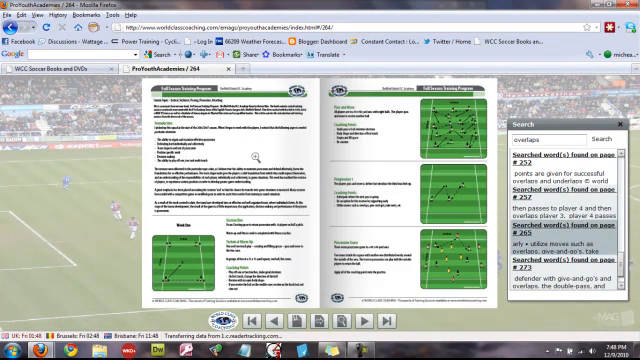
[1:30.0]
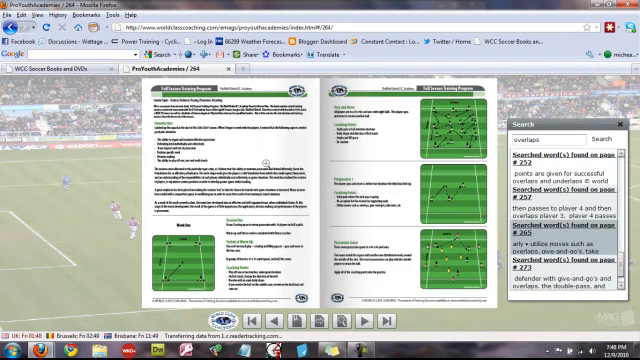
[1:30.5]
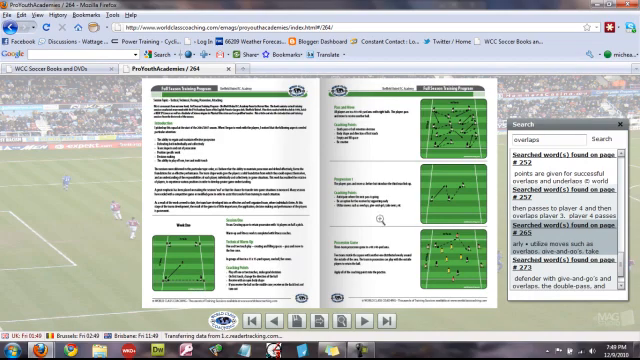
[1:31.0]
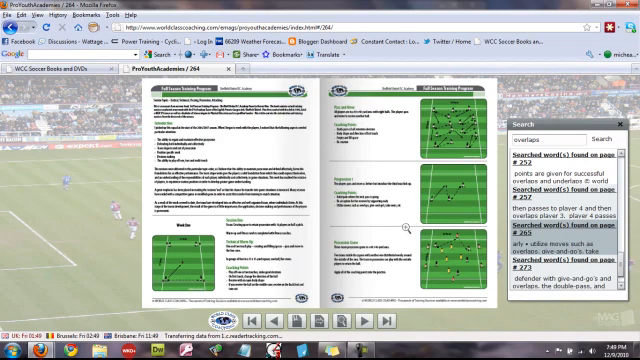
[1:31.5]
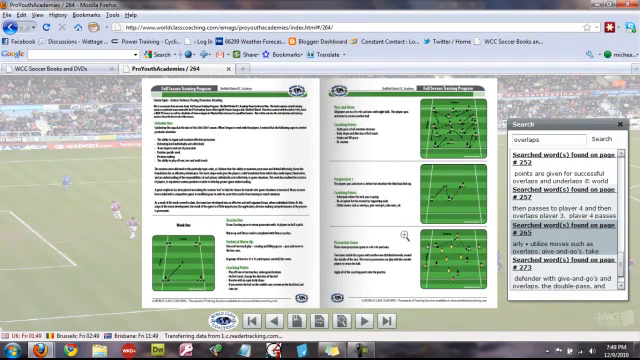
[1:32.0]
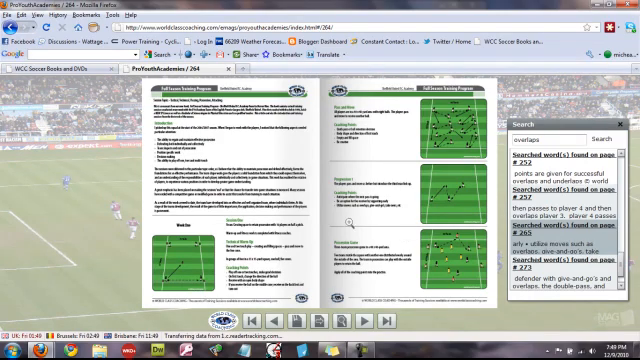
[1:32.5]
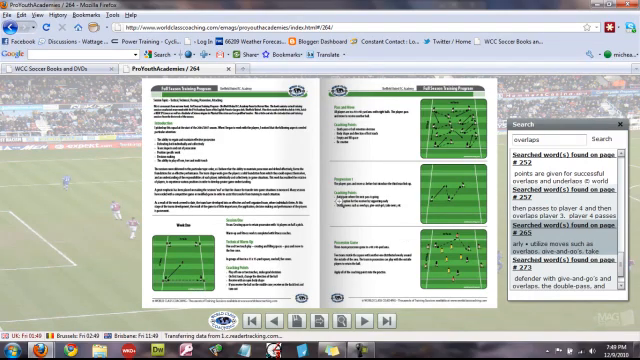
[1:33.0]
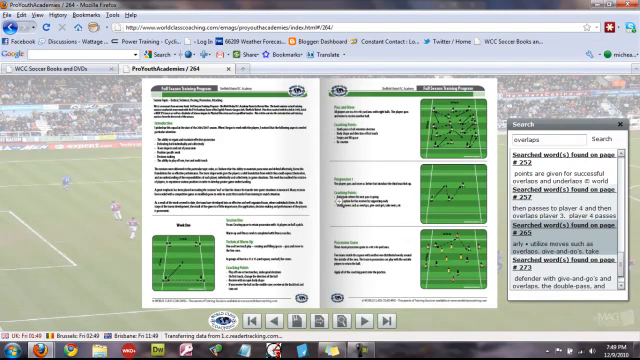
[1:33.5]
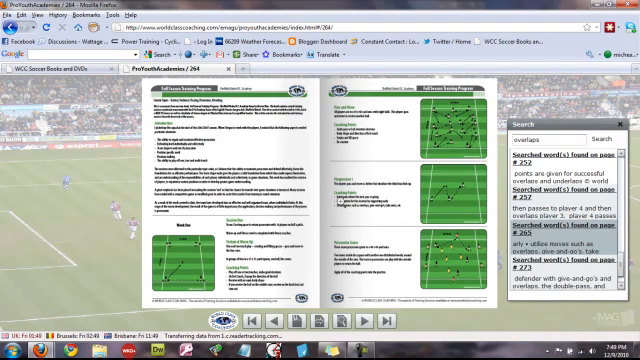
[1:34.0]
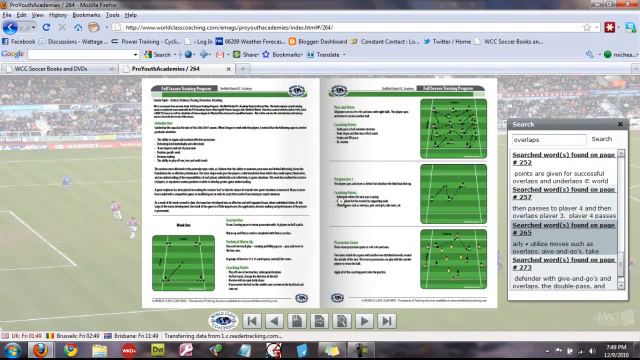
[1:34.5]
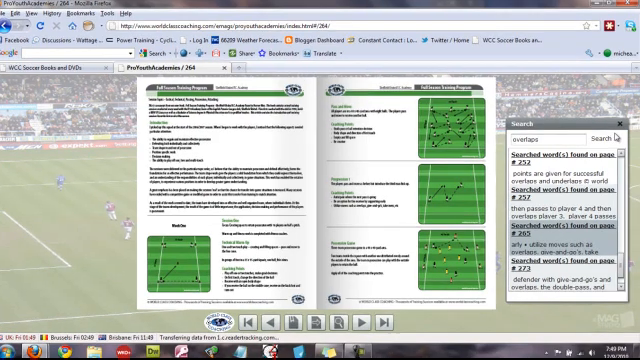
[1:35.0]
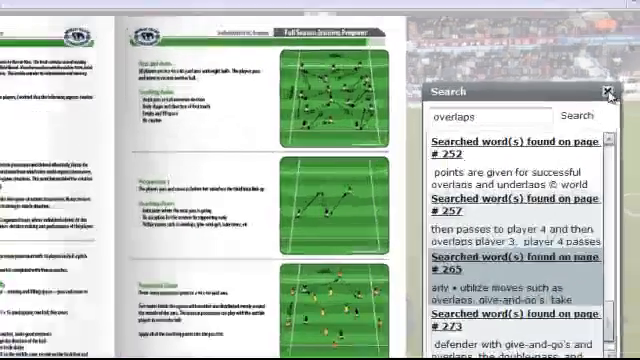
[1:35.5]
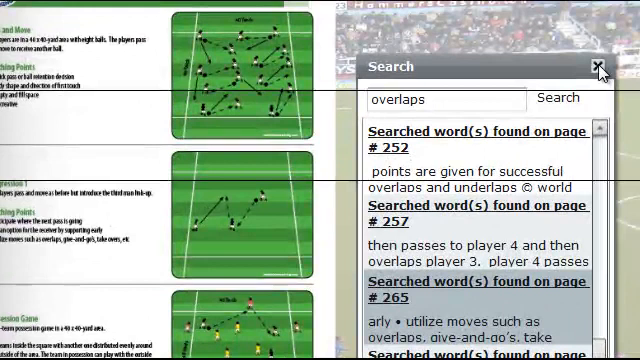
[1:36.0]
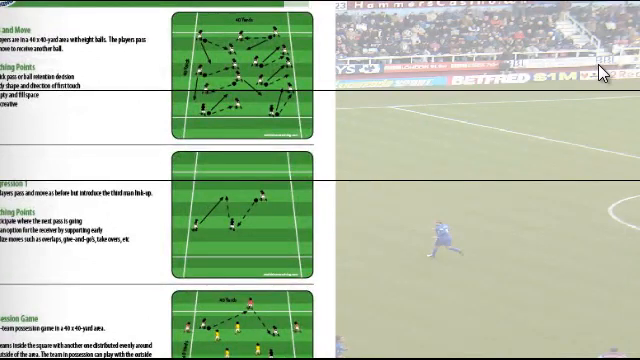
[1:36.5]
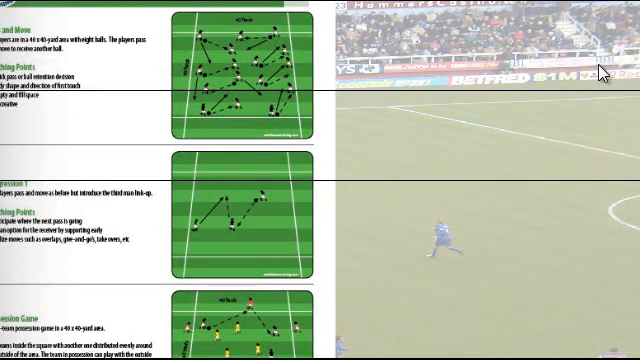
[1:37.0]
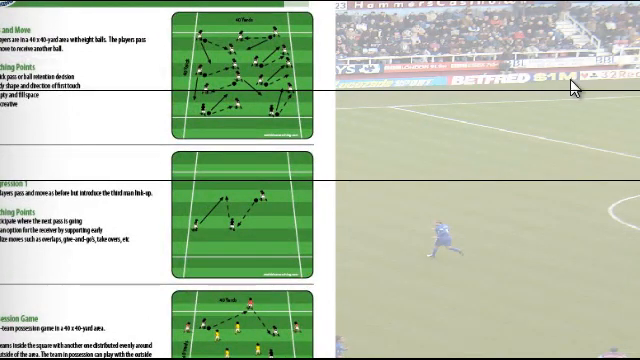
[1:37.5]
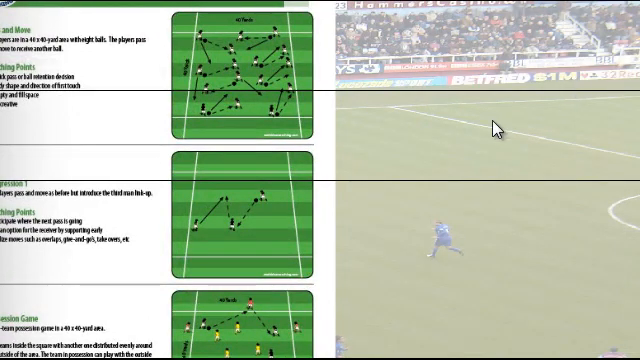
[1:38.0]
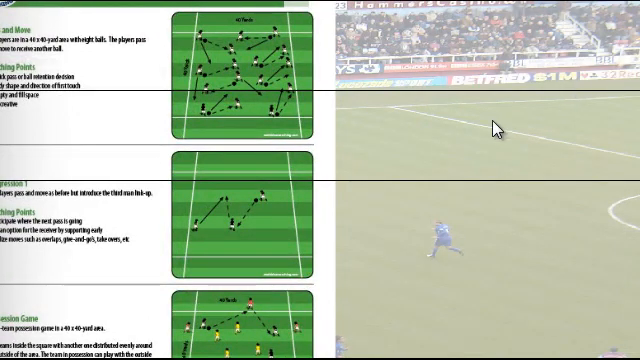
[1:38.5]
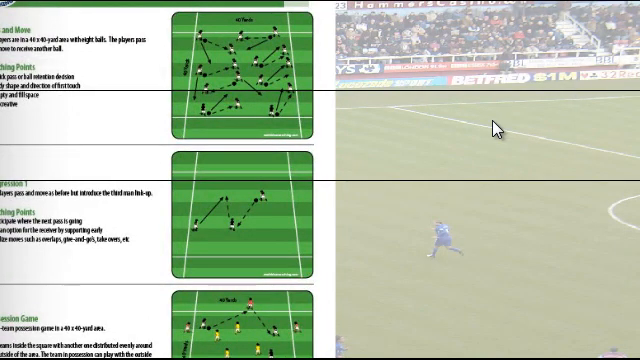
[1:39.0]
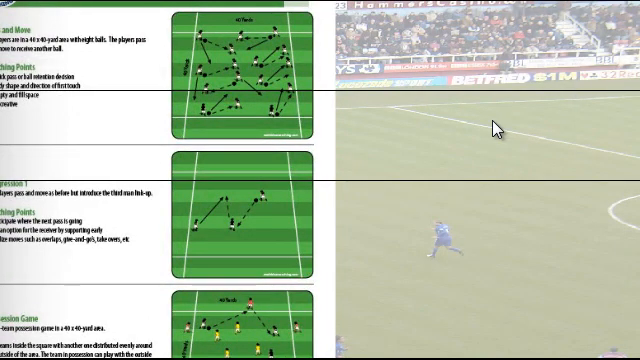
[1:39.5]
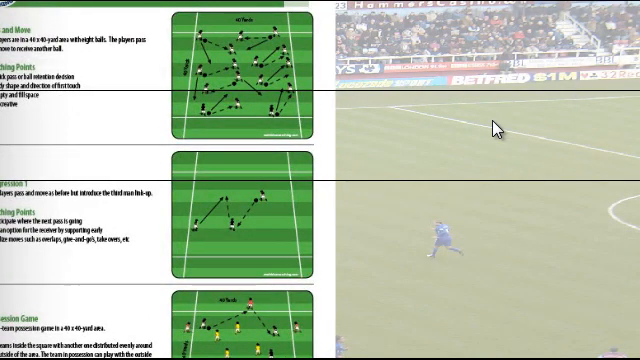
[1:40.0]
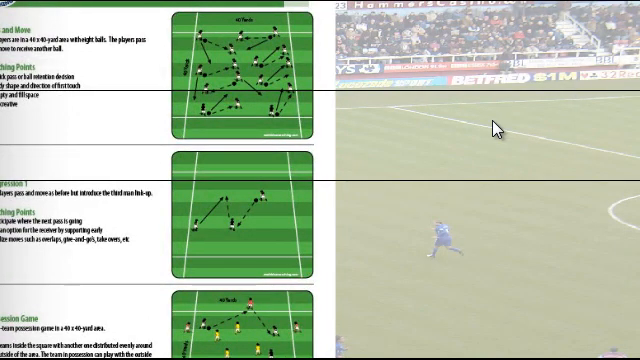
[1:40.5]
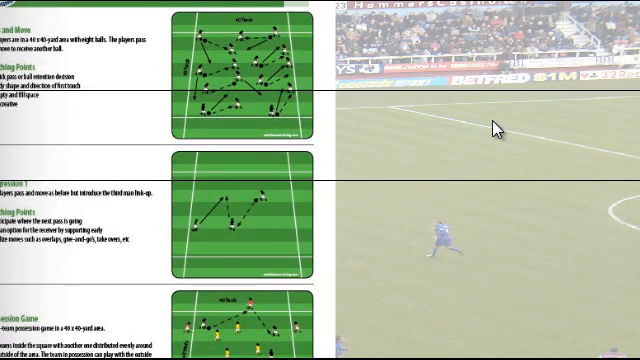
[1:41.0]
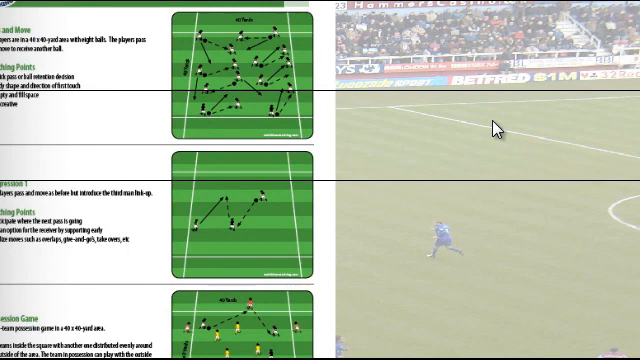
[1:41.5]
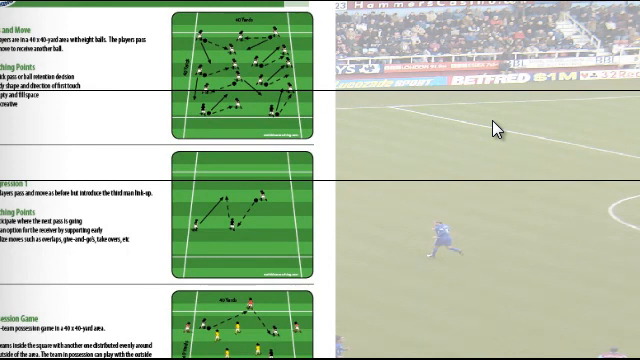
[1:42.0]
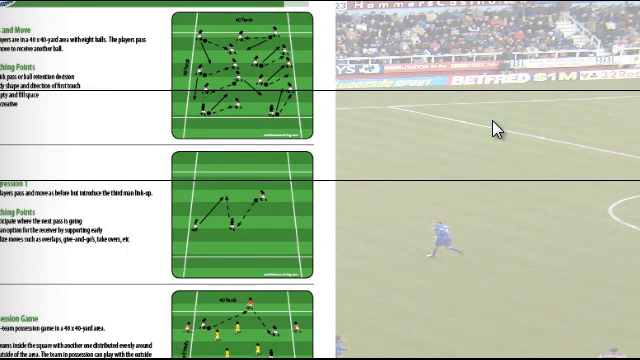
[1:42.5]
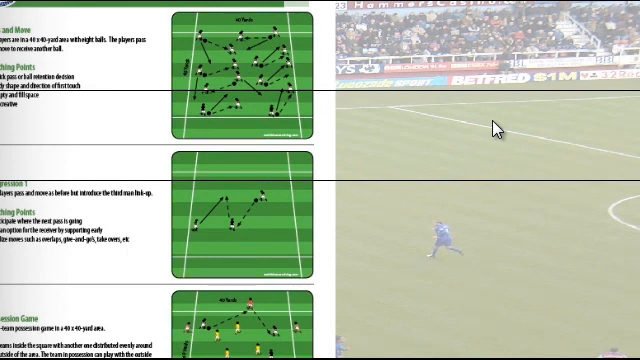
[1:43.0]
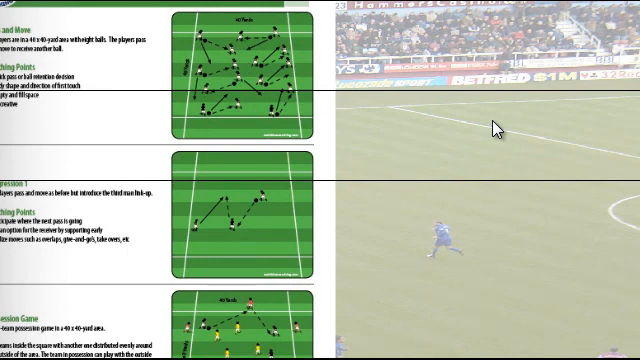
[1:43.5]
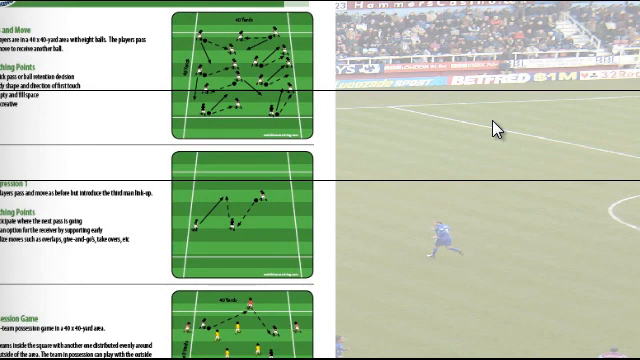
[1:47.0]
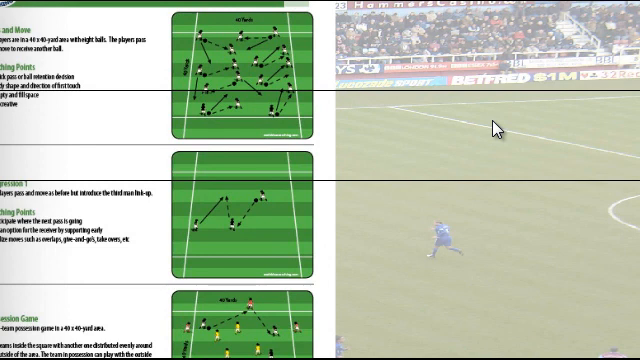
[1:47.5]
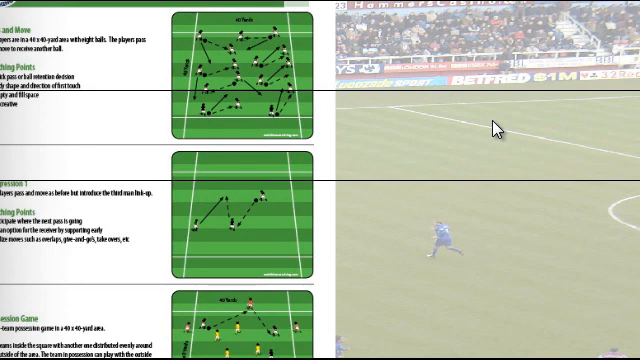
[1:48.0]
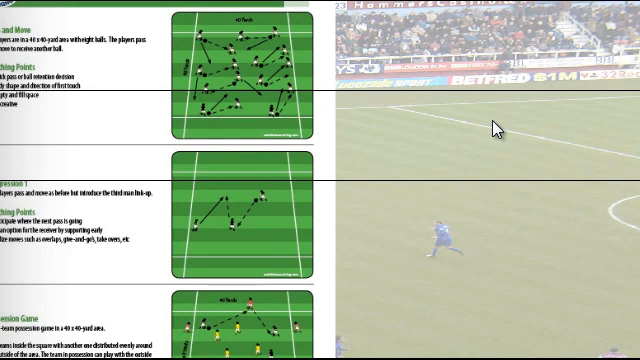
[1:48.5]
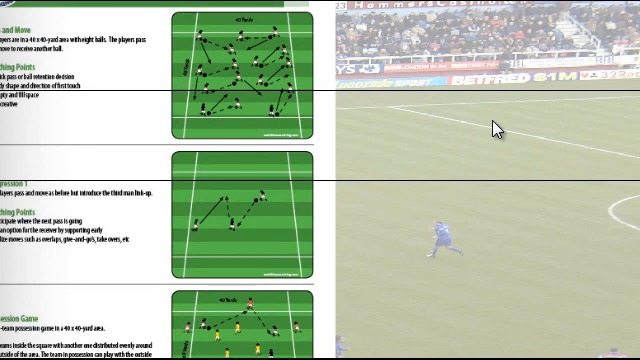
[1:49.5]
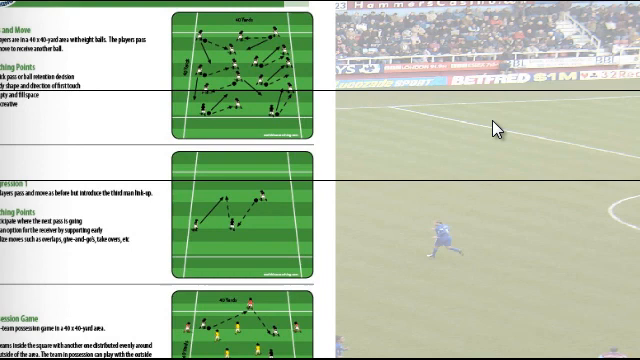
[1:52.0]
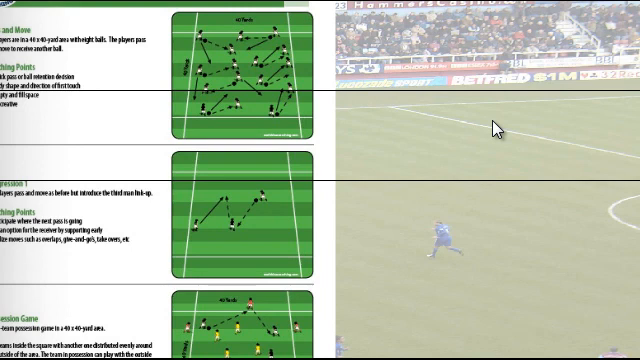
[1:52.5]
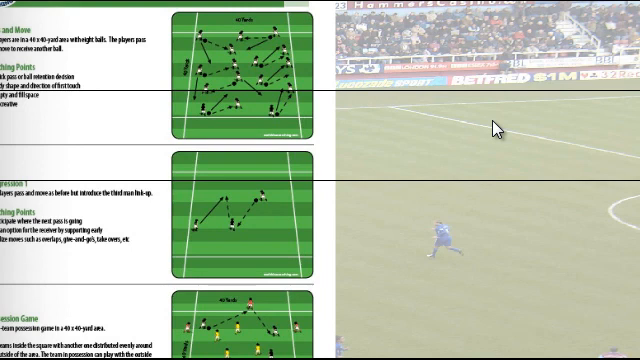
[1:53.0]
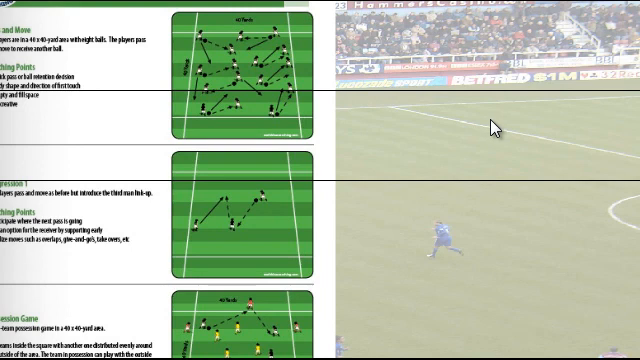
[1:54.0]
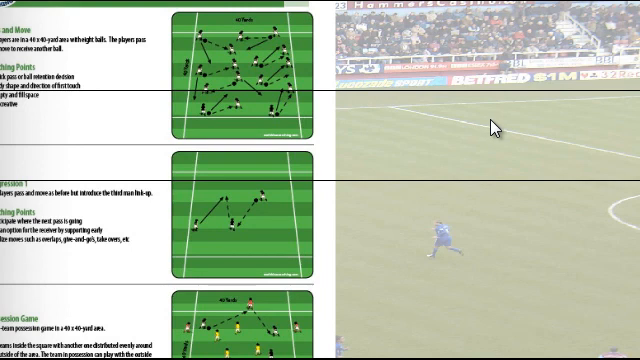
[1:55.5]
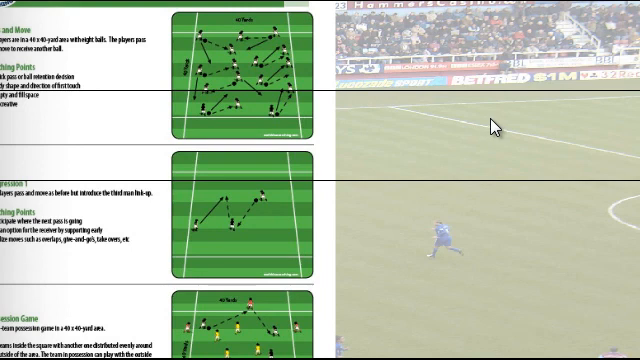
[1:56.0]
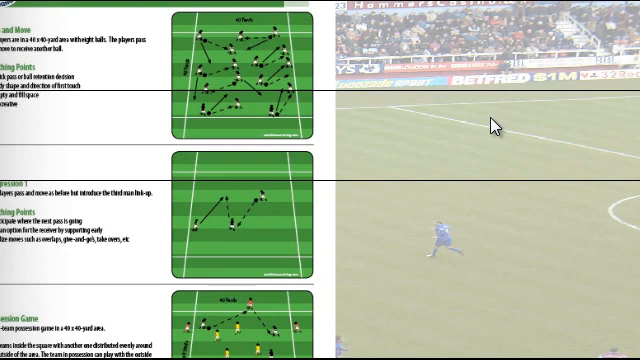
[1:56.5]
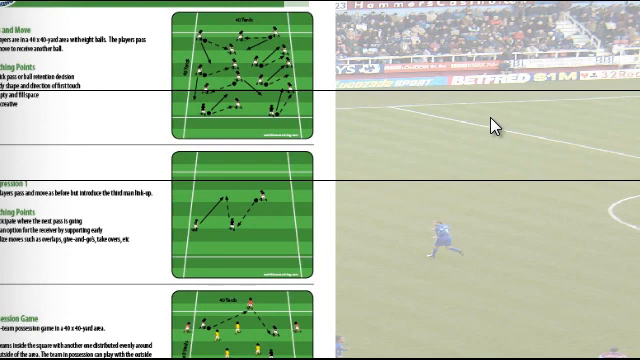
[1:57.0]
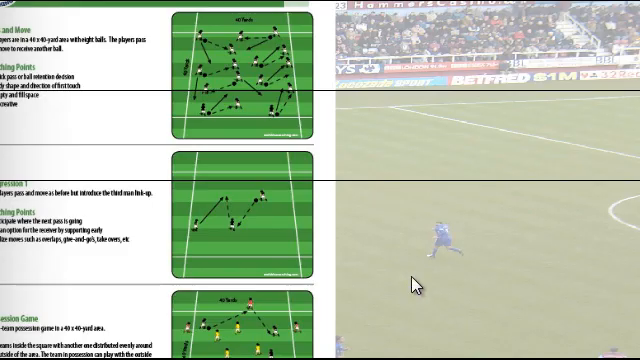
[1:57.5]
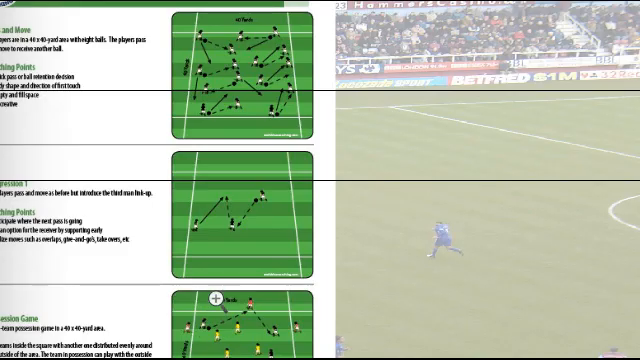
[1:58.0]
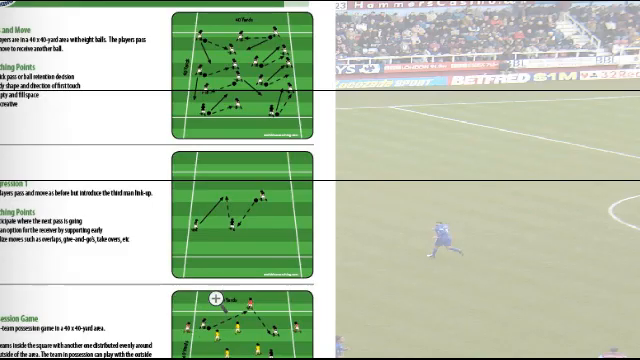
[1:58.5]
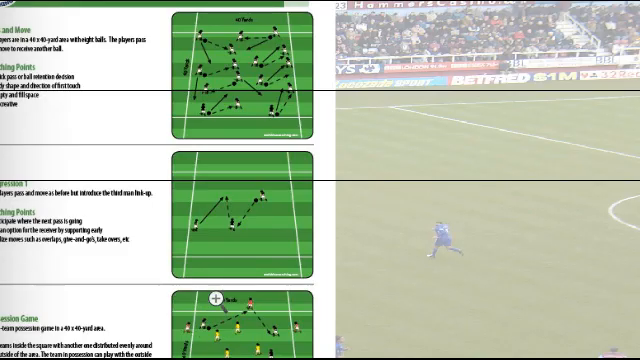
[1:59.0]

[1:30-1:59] A soccer field is in the background on a web page, with the typical navigation bar items at the top. There are two pages on the screen, one on the left and one on the right. The left page has one soccer field and a lot of writing in black letters. The right page has three soccer fields in a vertical line with a lot of writing to their left. To the right of this is a search bar with many search results. The pointer moves over to the right page, the one with three soccer fields, and shows a magnifying glass. The pointer then goes to the search bar and clicks the X, and the search bar disappears; the pointer is then kind of sitting in the top right of the screen. Below the pointer is a soccer player in blue, with his left leg extended out in front of his right leg and his right leg behind him and off the ground, as if he is running. The pointer moves slightly to the left and down onto the bottom soccer field, and turns into a magnifying glass.